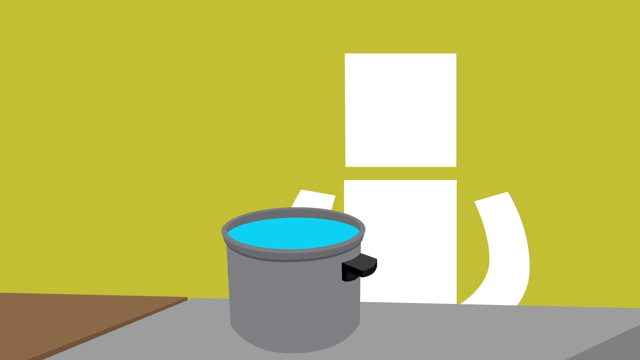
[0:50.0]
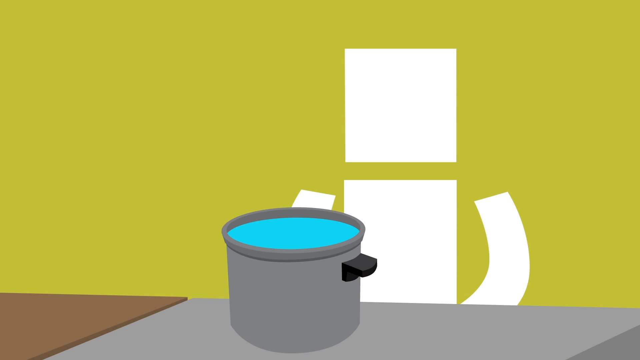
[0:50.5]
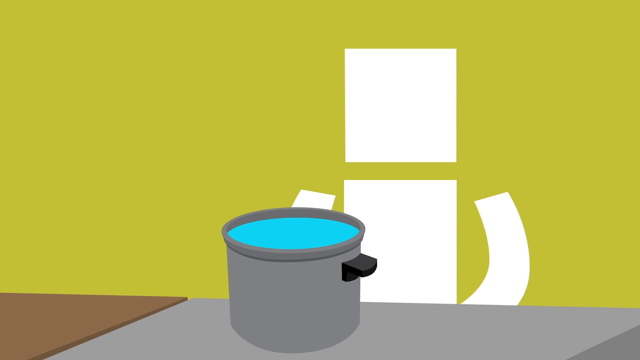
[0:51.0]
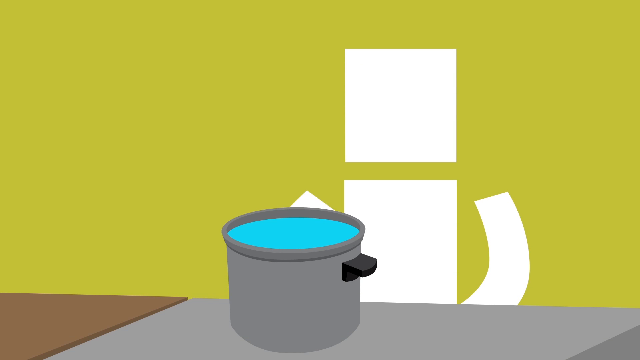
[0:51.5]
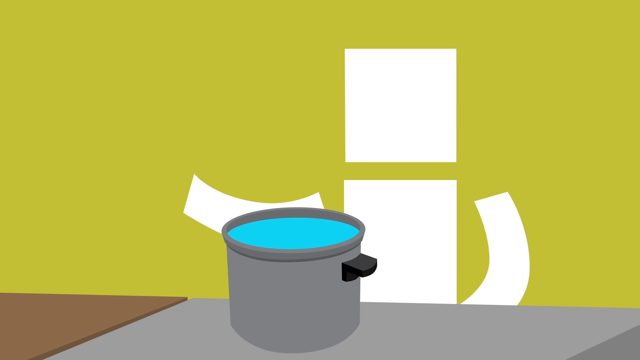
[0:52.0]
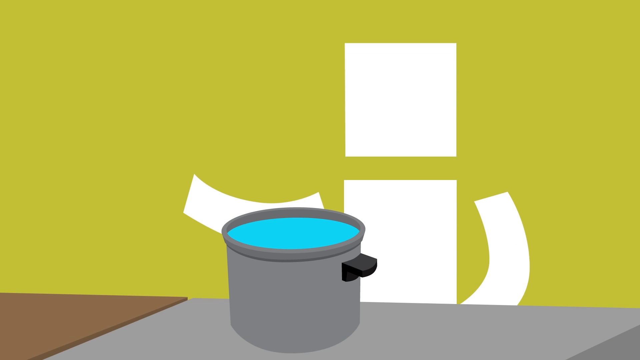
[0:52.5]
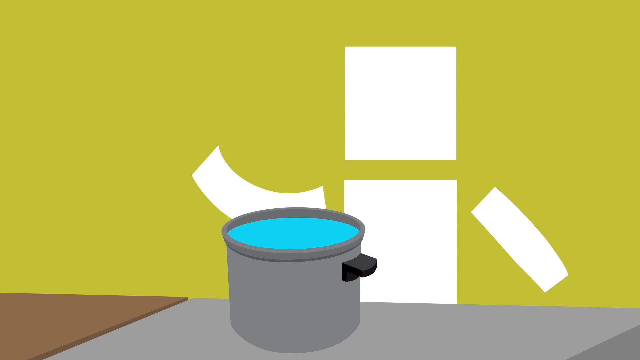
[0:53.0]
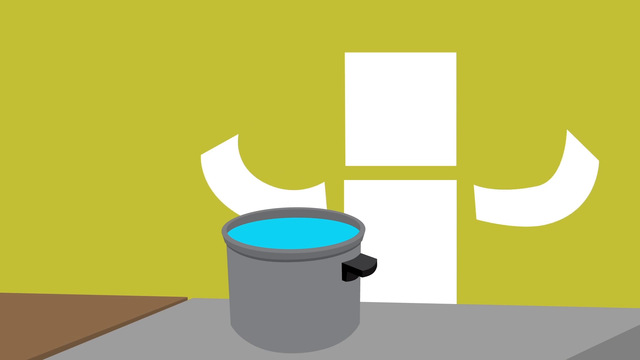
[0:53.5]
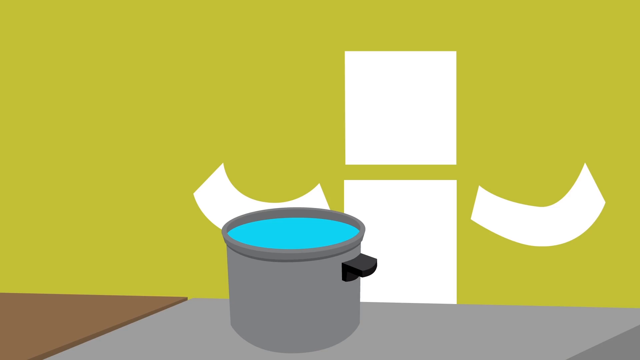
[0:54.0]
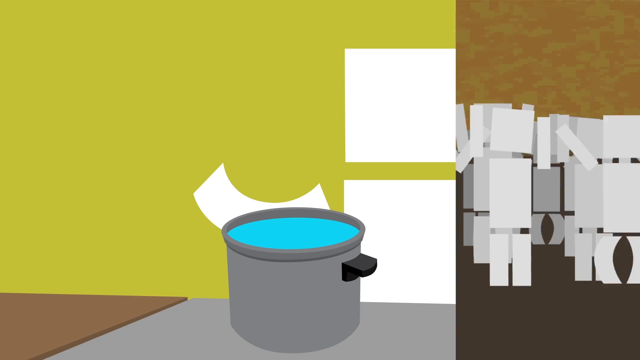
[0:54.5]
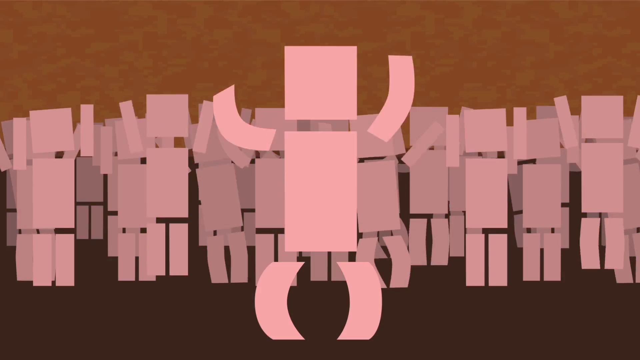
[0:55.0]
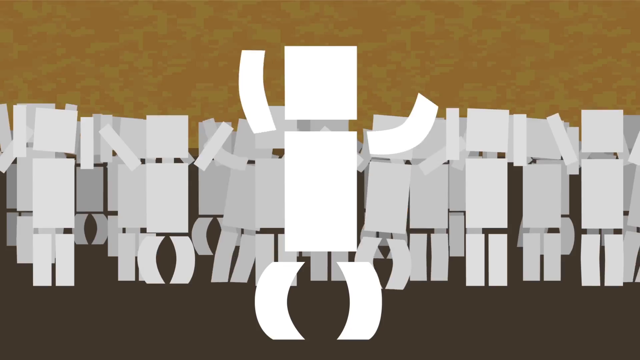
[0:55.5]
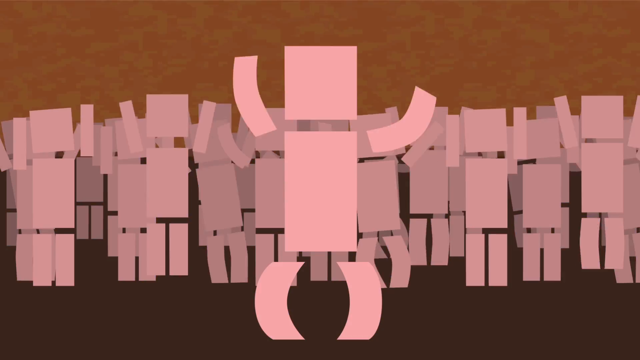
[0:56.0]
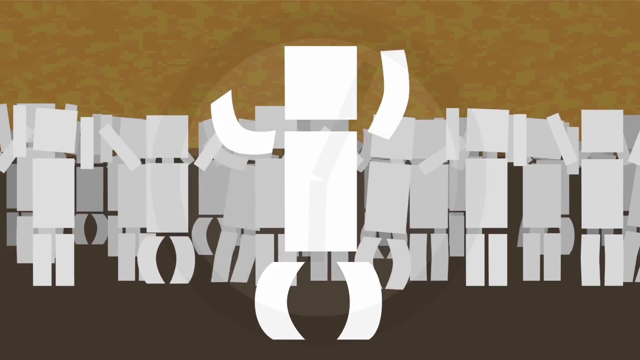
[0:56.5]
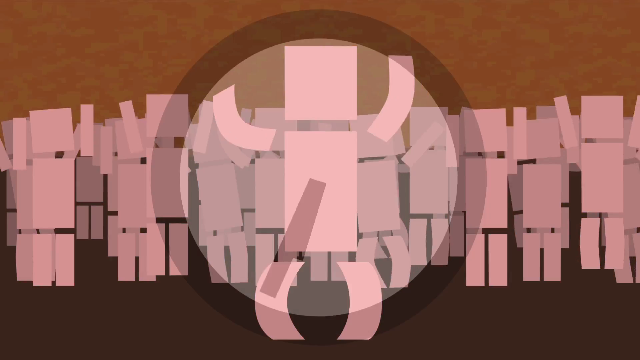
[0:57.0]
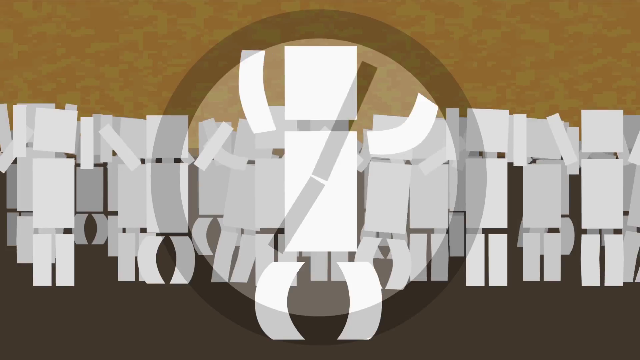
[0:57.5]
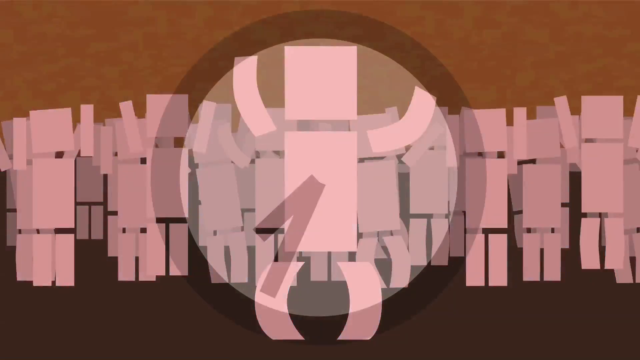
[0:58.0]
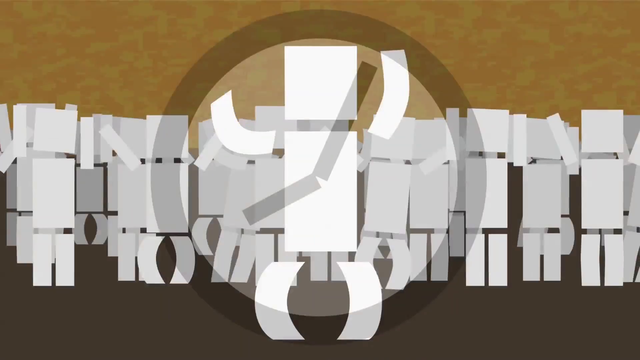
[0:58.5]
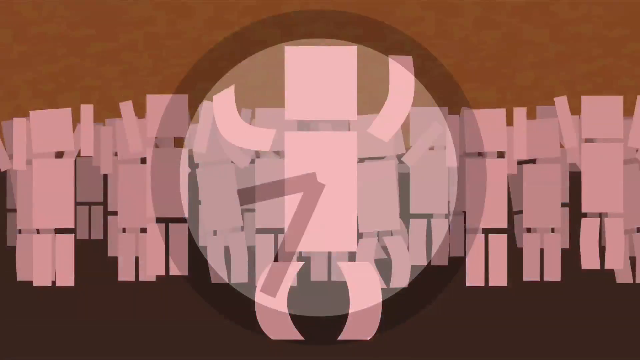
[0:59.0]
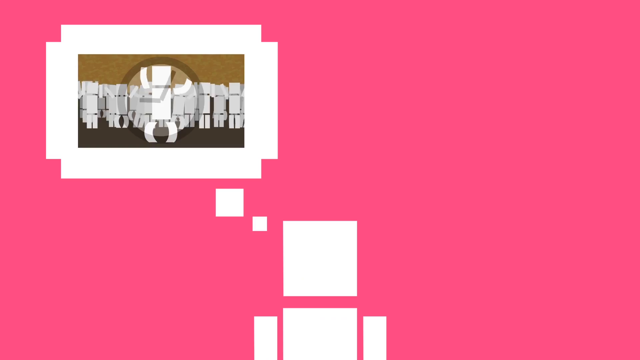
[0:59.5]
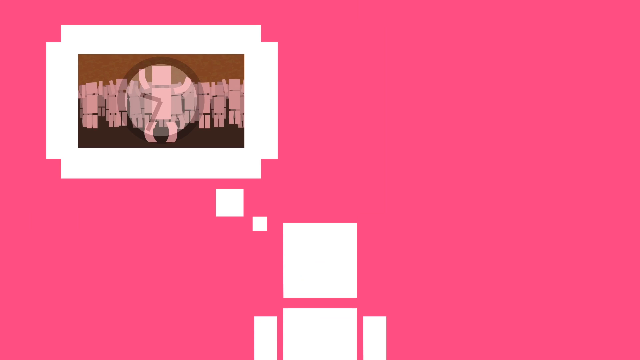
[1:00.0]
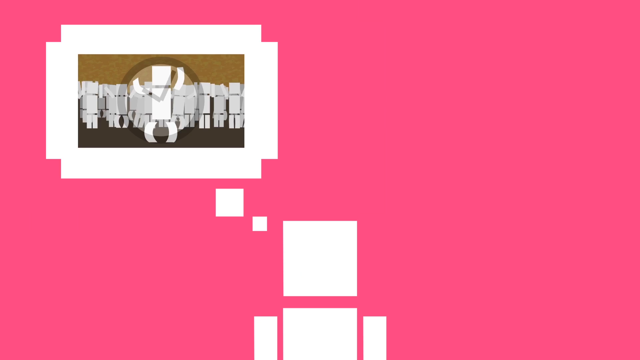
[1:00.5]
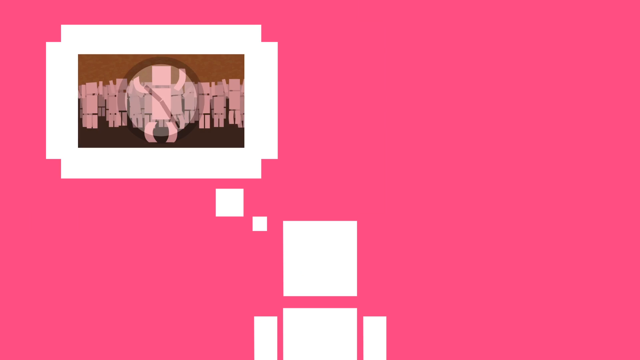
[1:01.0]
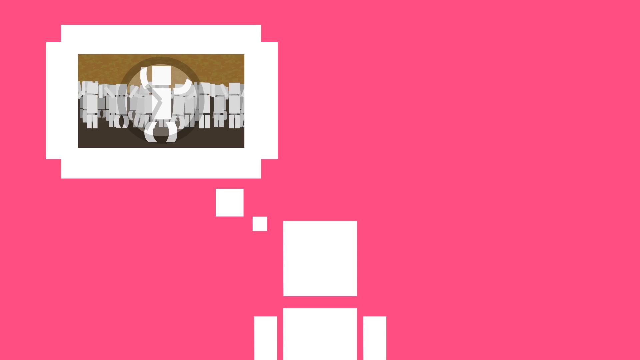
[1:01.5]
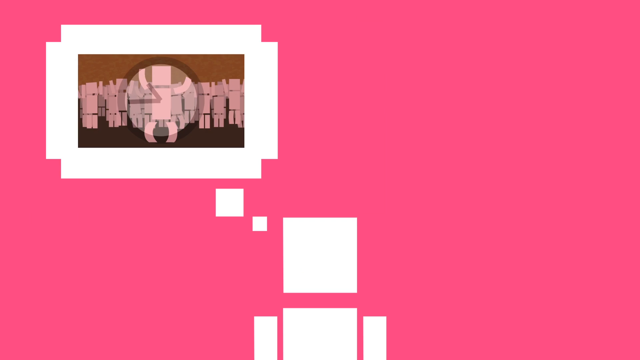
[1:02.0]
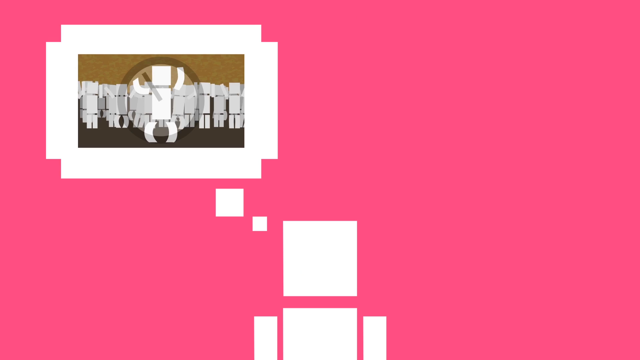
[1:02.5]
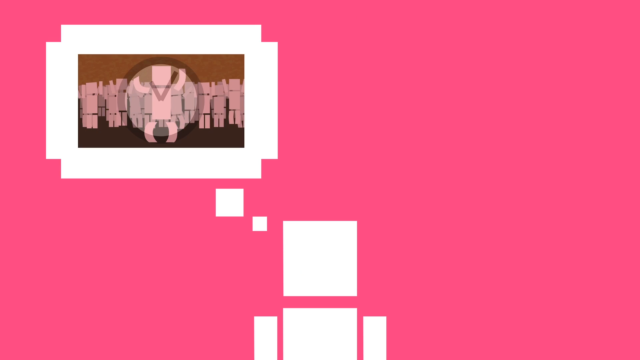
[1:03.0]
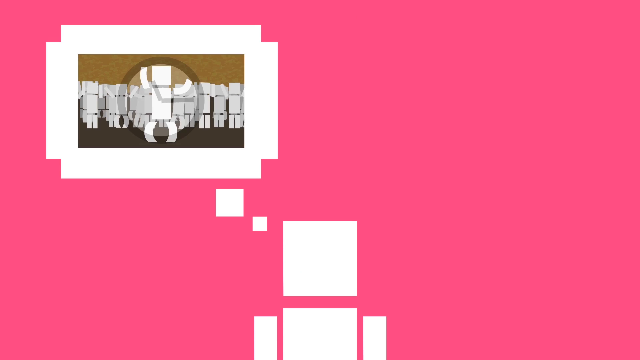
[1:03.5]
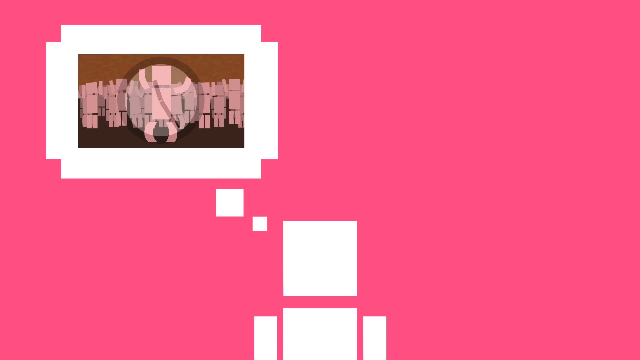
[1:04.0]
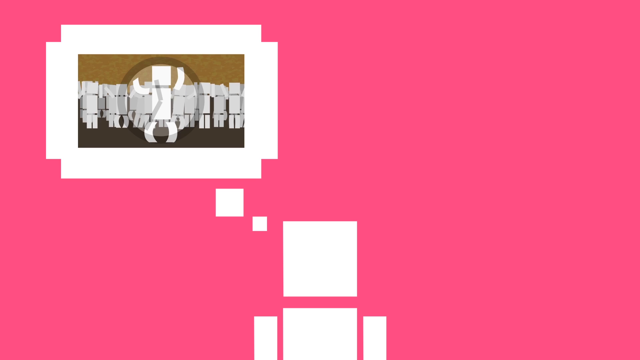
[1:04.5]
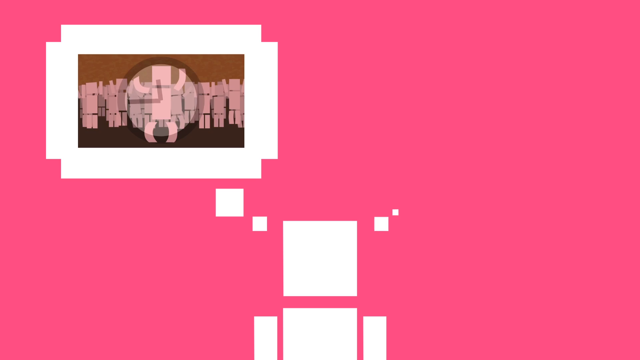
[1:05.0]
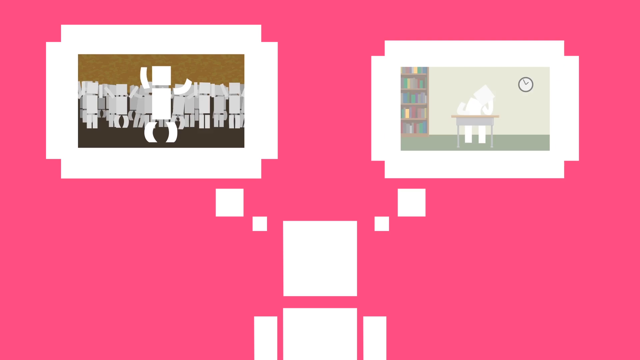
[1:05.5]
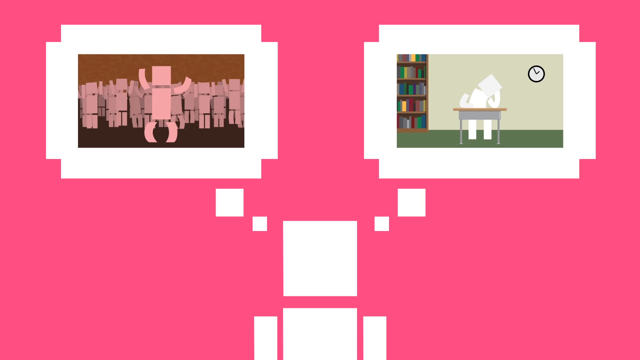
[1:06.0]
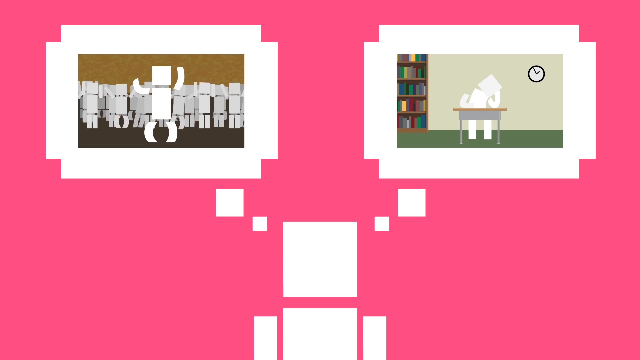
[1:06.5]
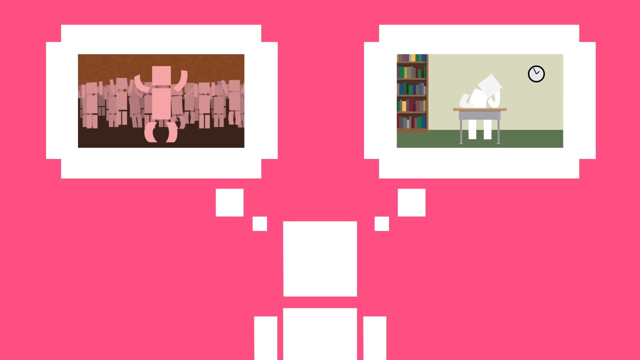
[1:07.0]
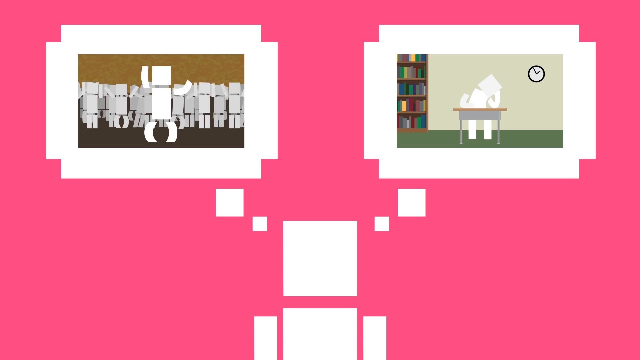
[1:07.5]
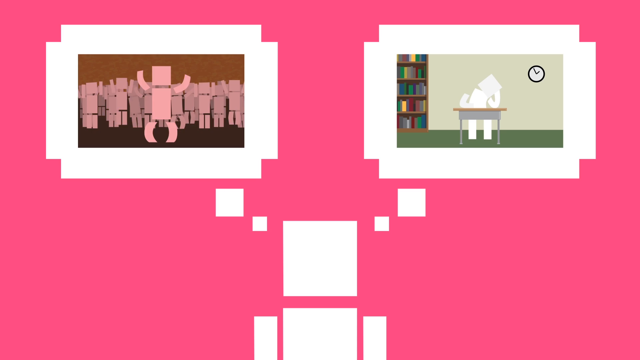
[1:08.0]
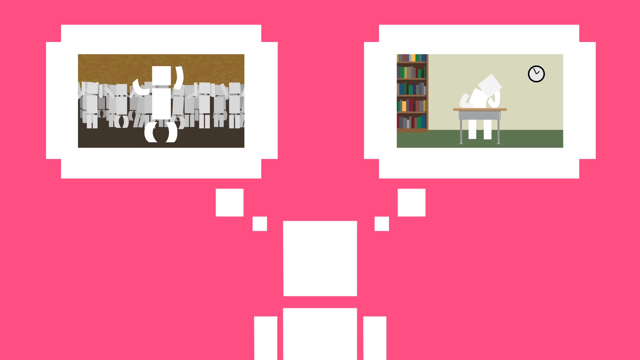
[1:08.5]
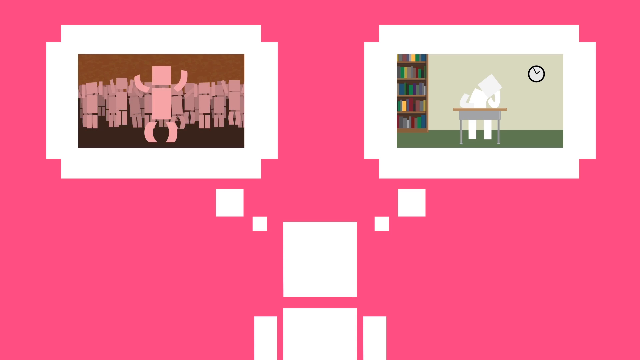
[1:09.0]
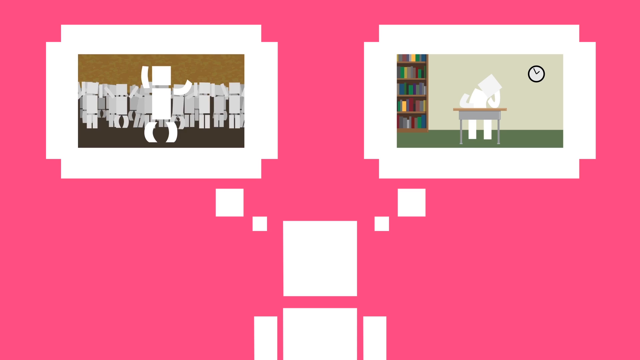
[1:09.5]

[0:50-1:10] The blockhead character moves his right arm up, then his left arm, and waves them both up. It appears he is having a flashback to the dance party, where both his arms are also waving, with a semi-transparent clock superimposed on the dance scene of the crowd of blockhead people in the background and the blockhead character in the foreground. The clock is in time-lapse, its minute hand turning rapidly and the hour hand turning accordingly. The view zooms out to reveal that the party scene with the rapidly turning clock is inside a thought bubble from the blockhead character, apparently thinking about the party and how time flies there. The reduced party scene fits inside the thought bubble, against a reddish-pink background. On the opposite, right side, another thought bubble emanates from his head, showing him struggling to stay focused at the school desk in the earlier scene with the clock in the upper right-hand corner and the bookshelf on the left side of the frame.